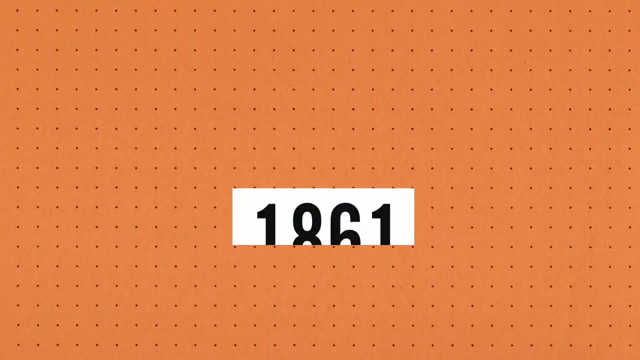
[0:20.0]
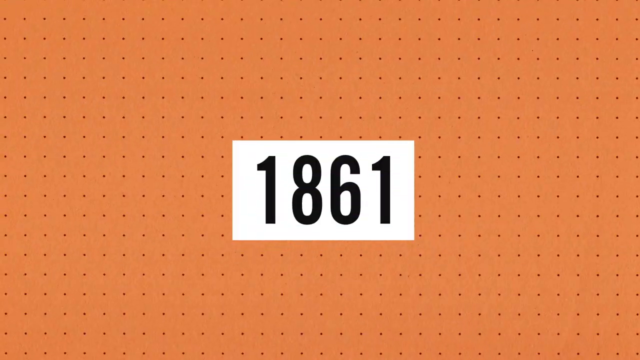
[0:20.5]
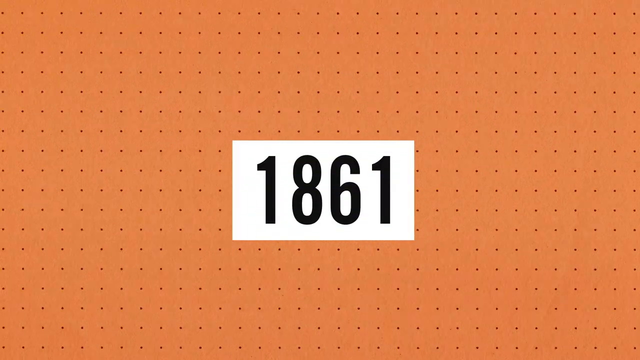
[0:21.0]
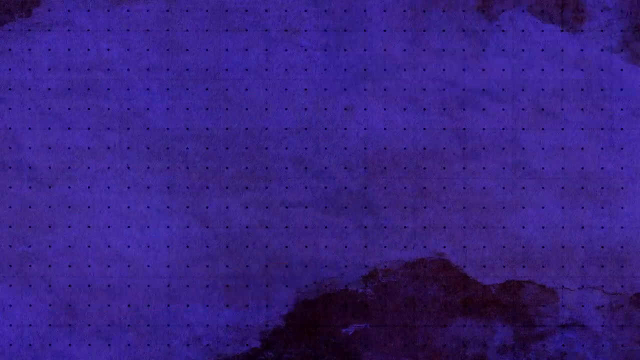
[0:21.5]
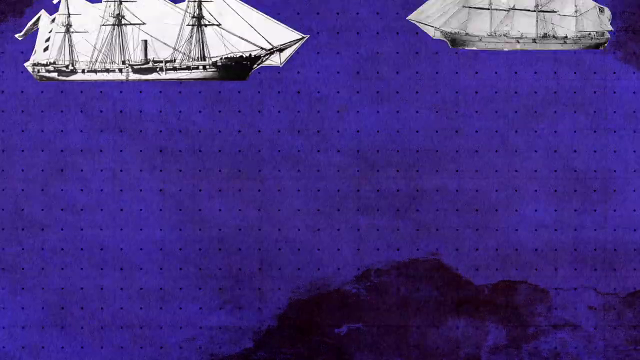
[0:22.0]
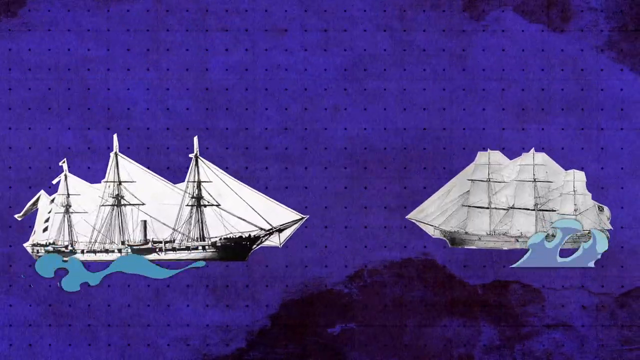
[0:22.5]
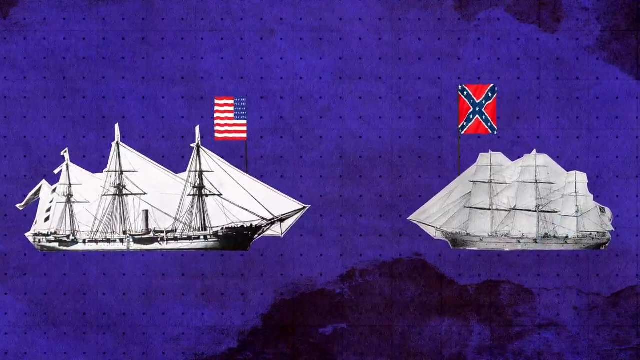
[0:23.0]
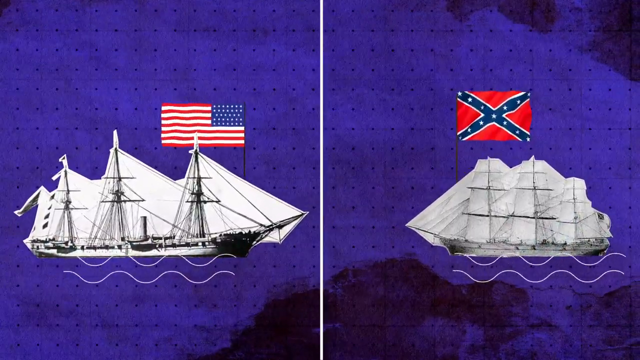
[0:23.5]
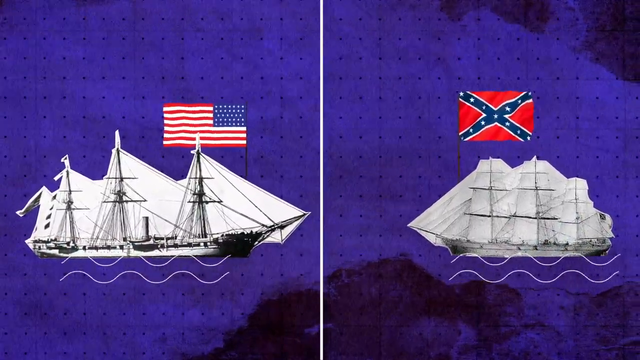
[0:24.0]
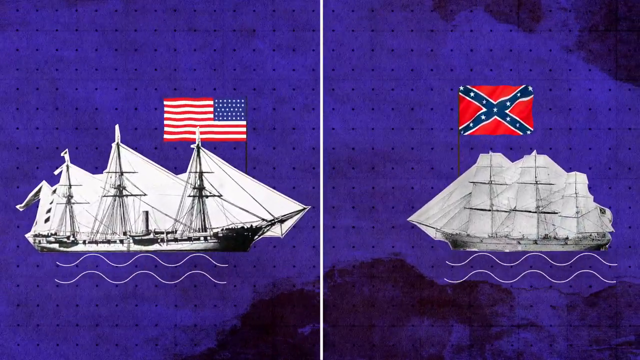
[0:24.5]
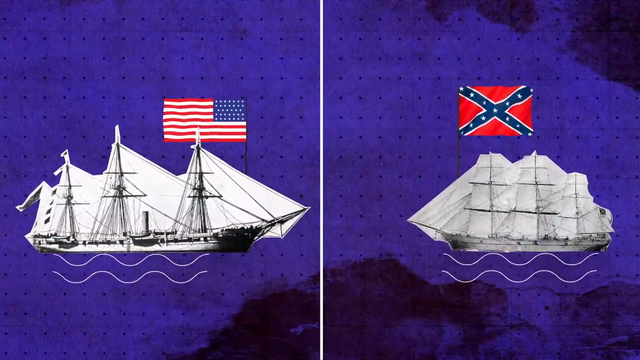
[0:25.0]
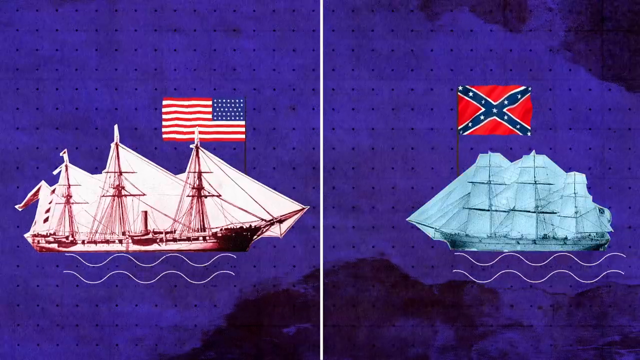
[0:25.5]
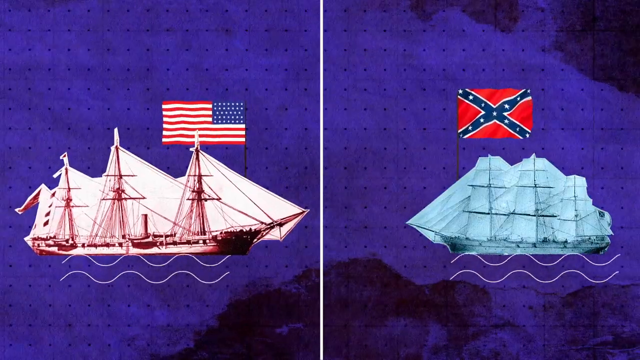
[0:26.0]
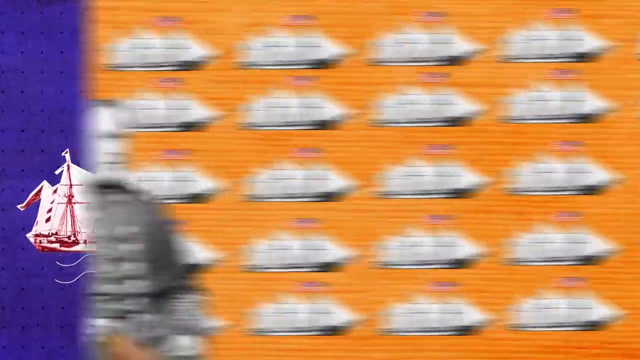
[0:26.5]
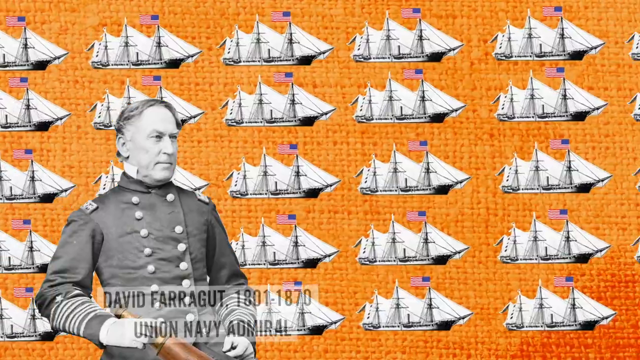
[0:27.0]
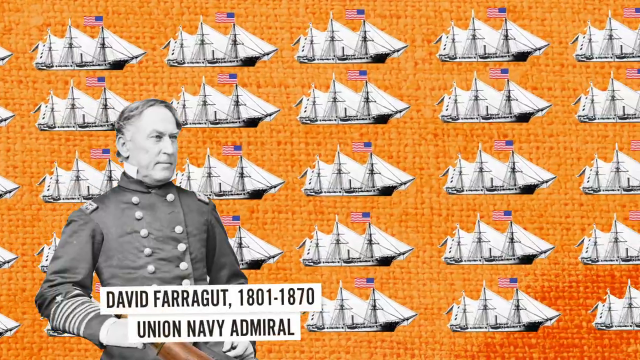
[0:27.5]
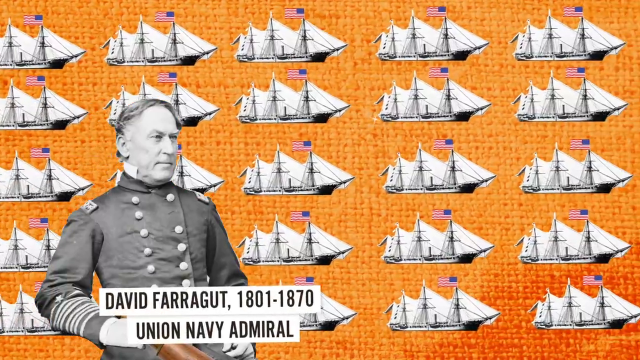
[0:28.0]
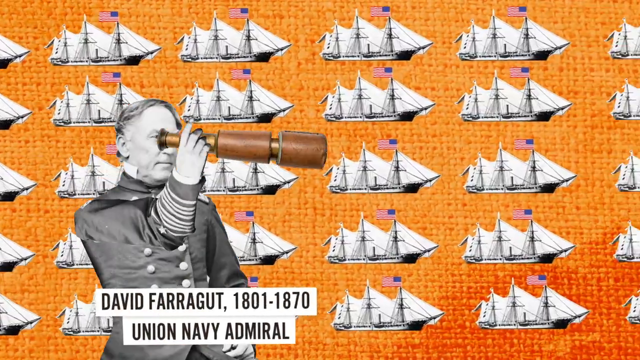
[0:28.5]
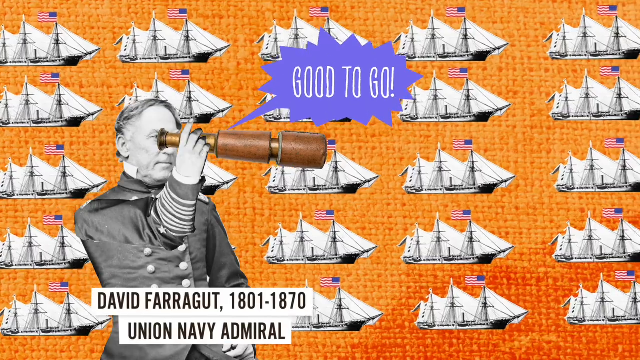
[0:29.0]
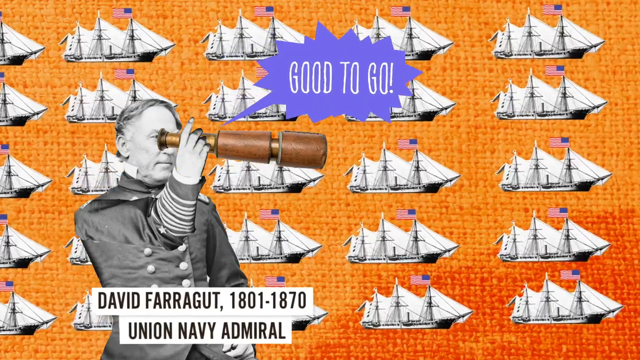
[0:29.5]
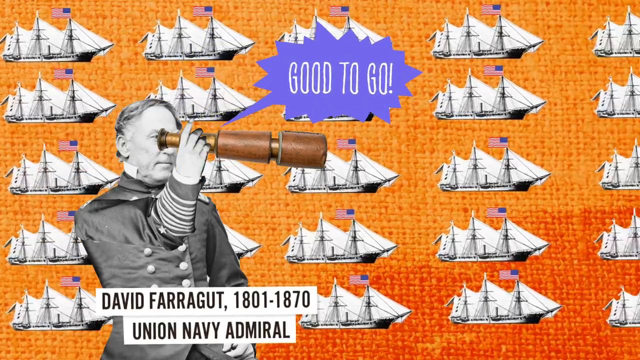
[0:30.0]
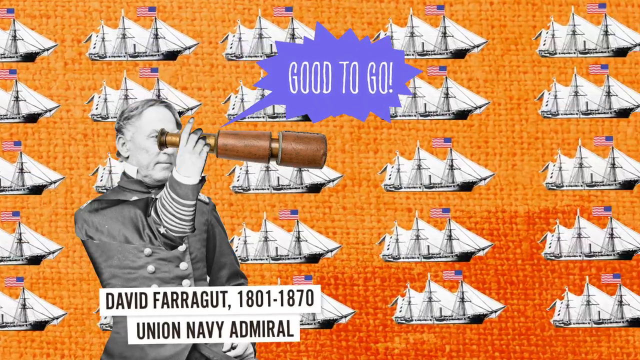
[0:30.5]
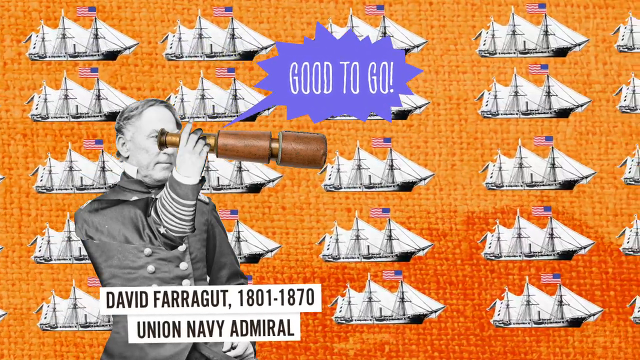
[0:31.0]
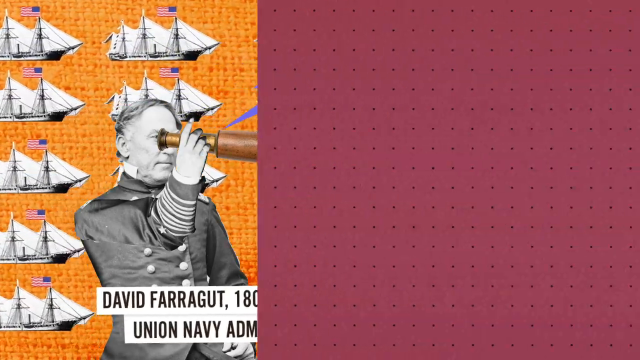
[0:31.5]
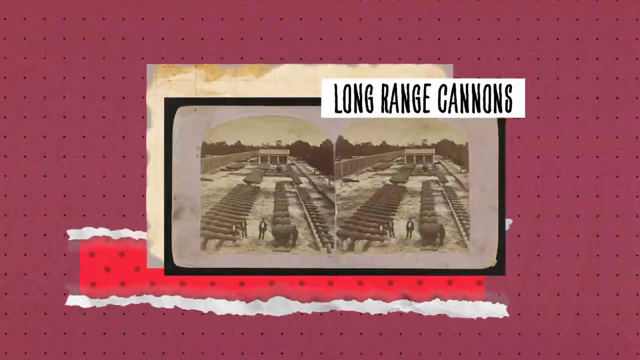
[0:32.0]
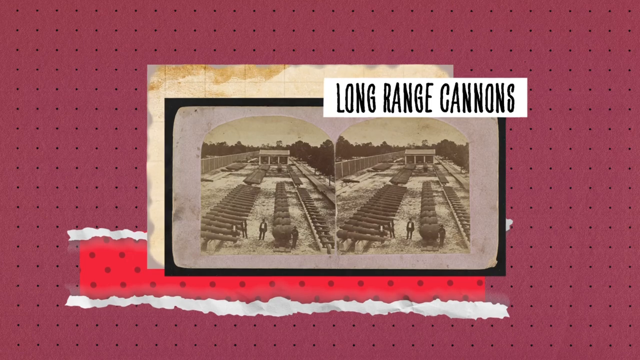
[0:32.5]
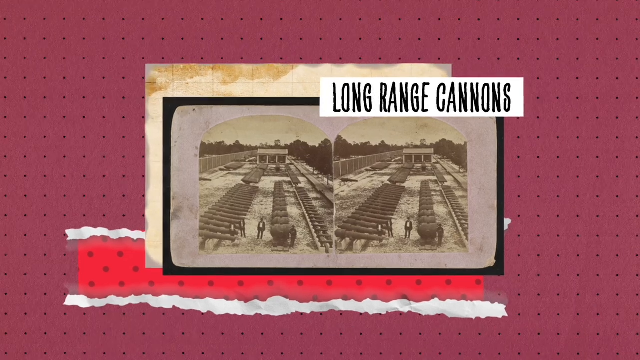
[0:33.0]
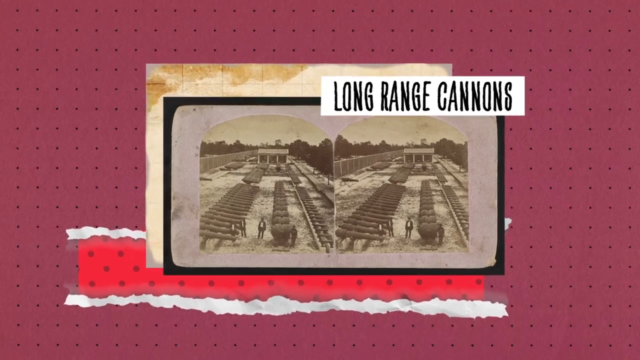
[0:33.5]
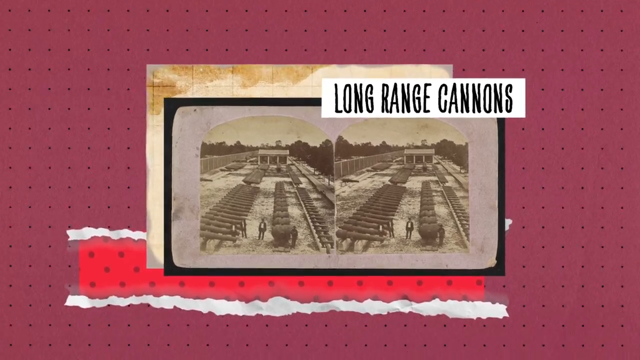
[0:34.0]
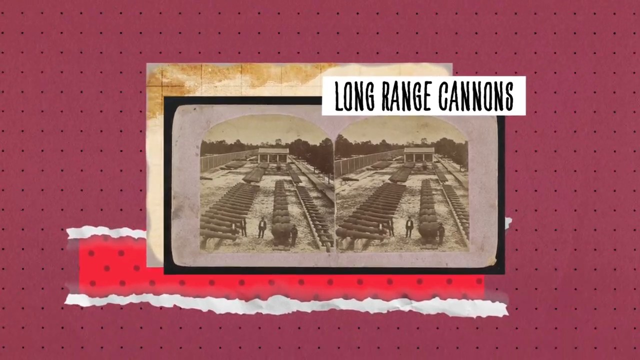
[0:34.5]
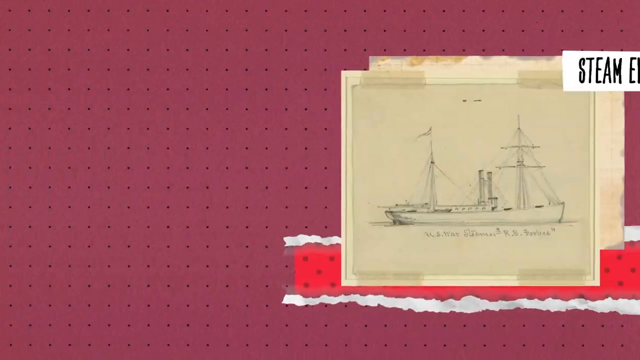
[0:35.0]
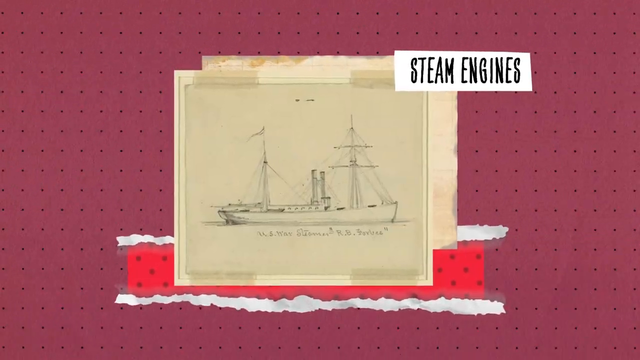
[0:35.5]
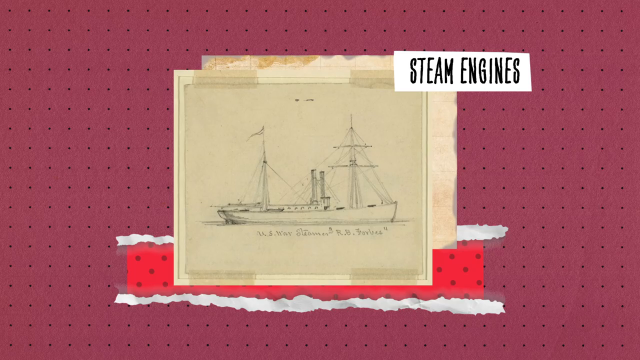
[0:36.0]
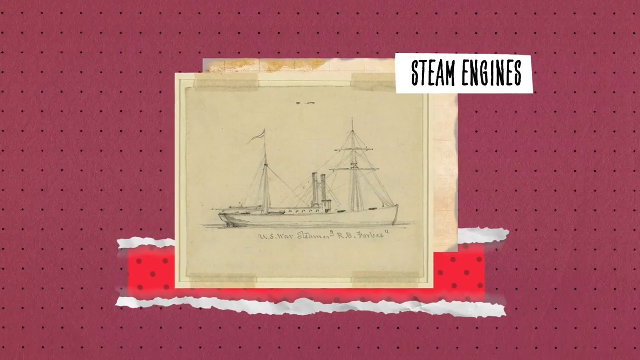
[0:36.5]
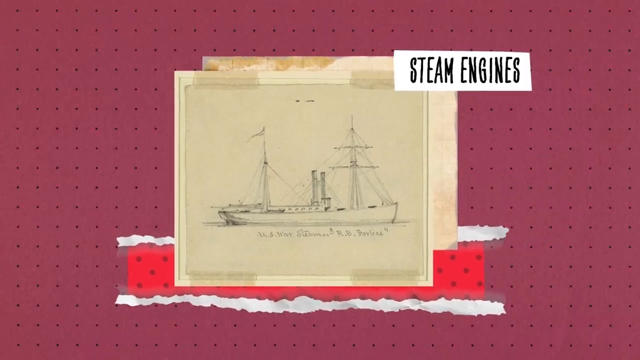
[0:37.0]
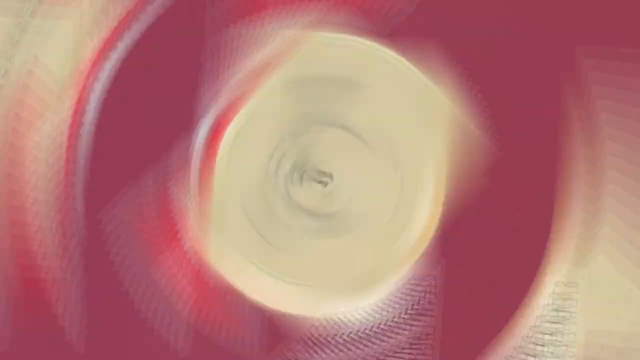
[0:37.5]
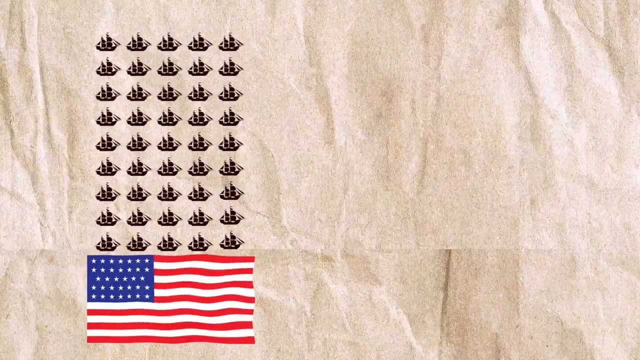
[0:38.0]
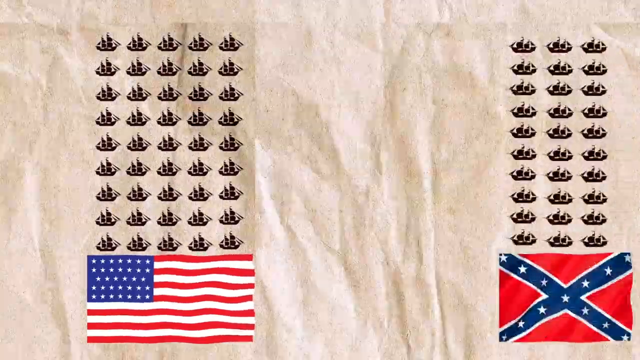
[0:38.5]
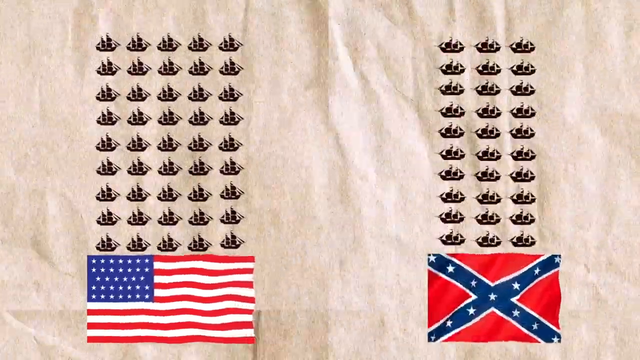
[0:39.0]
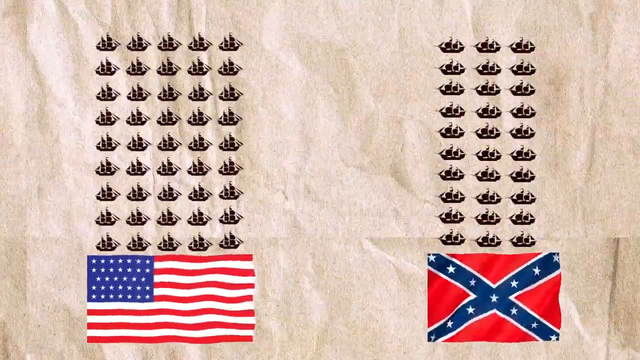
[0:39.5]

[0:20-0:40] An orange background appears with a white box that says "1861." Next is a dark blue background with a white line drawn down the middle. On the left is a large historical sailing boat with three sails and an American flag flying over it; on the right is another large ship, a little smaller, with a Confederate flag flying over it. Then an orange background shows a repeating pattern of many ships with the American flag, along with an image of a man in a historical naval uniform. On top of the image, text says "David Farragut 1801 to 1870 Union Navy Admiral," and he lifts a telescope to his eye. Black and white historical photographs follow, showing rows and rows of cannons with a few people standing next to them and a caption that says "long range cannons." Then comes what looks like a blueprint or hand-sketched drawing of a ship, with a caption next to it that says "steam engines."